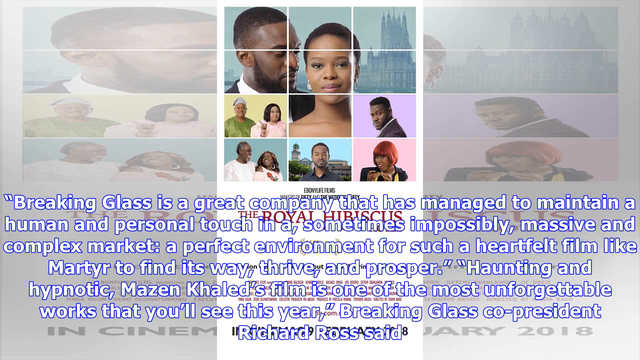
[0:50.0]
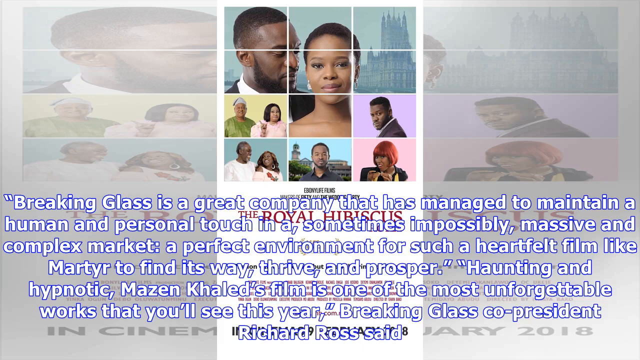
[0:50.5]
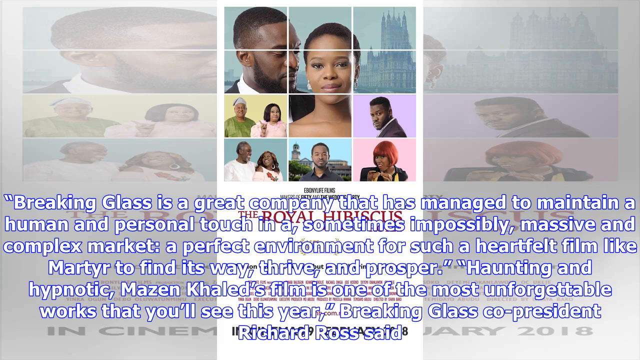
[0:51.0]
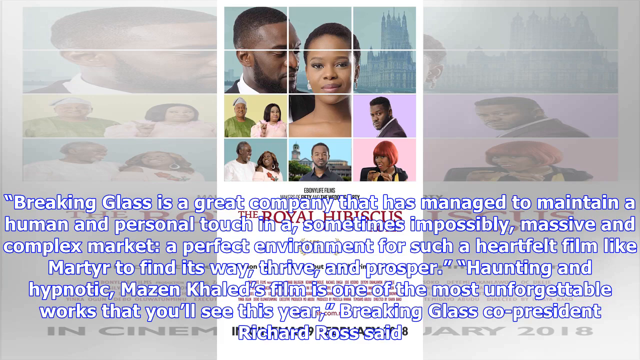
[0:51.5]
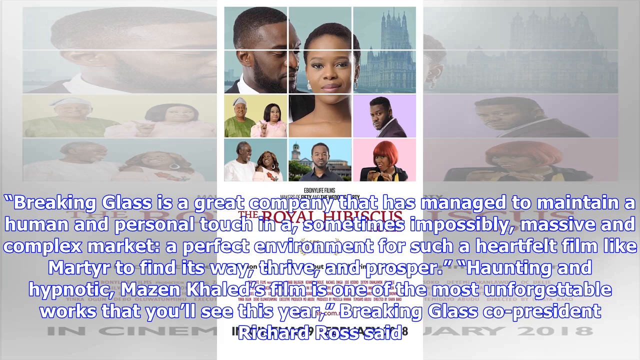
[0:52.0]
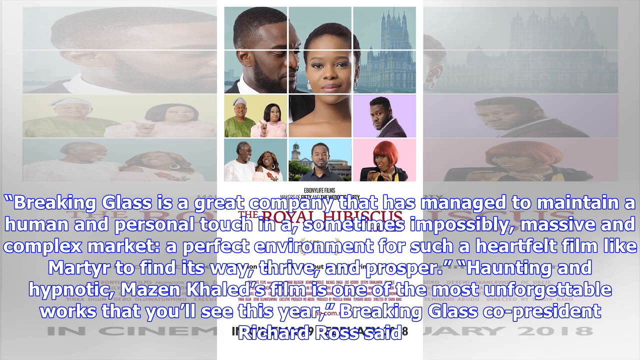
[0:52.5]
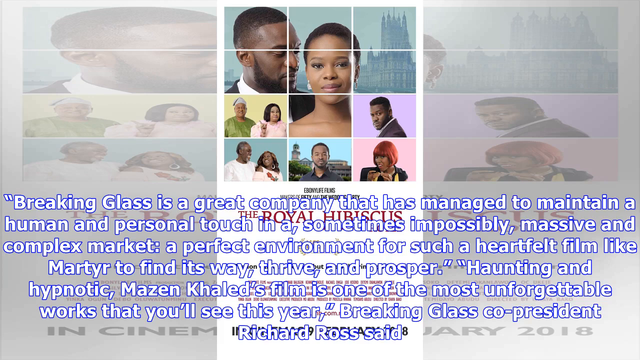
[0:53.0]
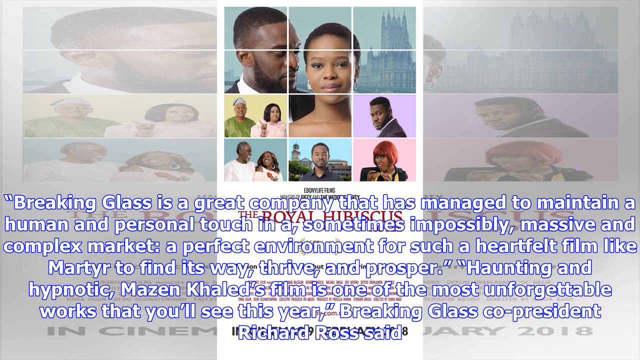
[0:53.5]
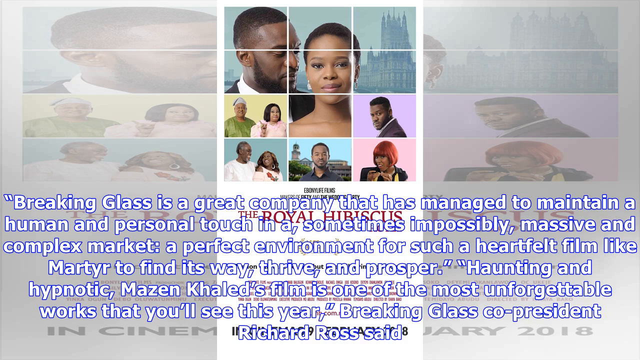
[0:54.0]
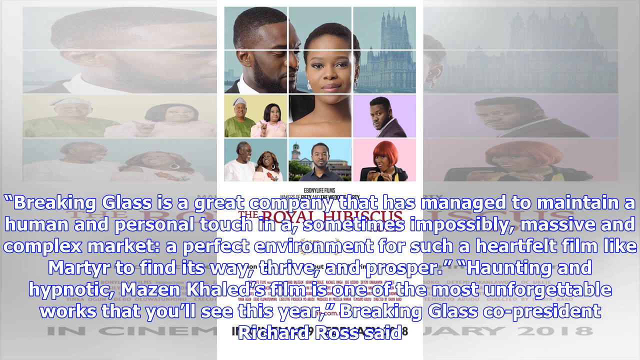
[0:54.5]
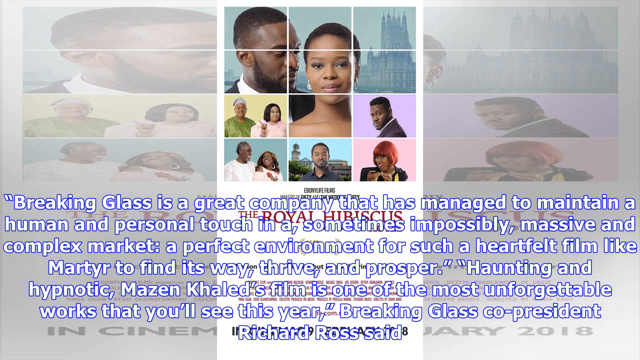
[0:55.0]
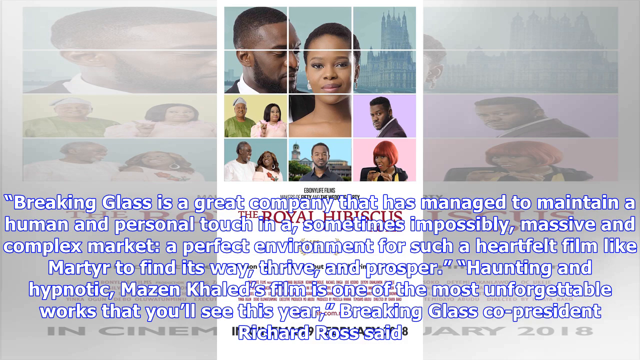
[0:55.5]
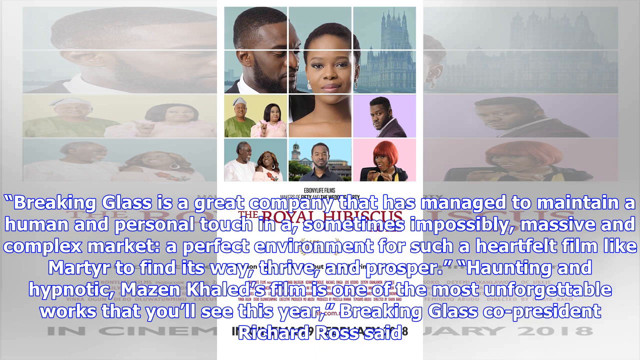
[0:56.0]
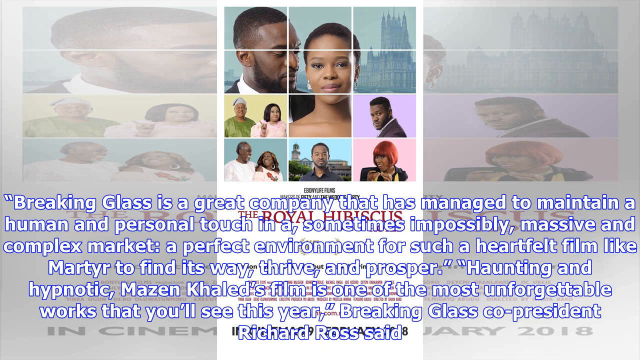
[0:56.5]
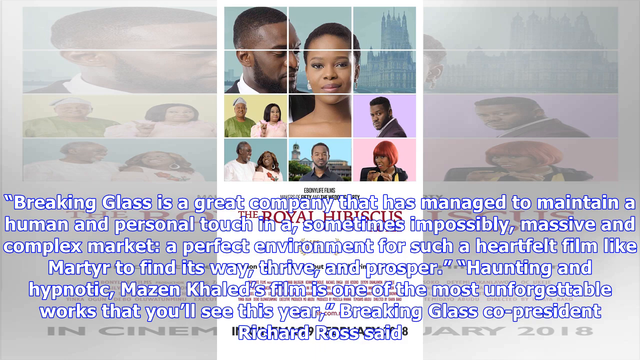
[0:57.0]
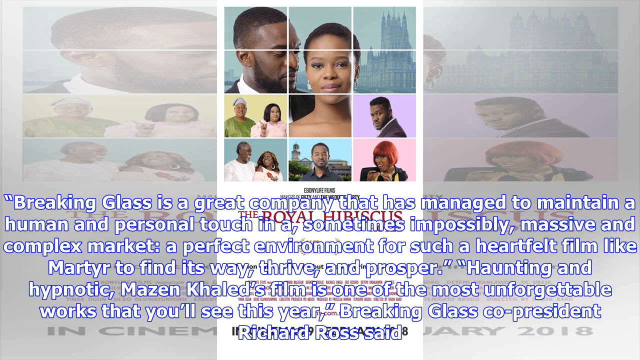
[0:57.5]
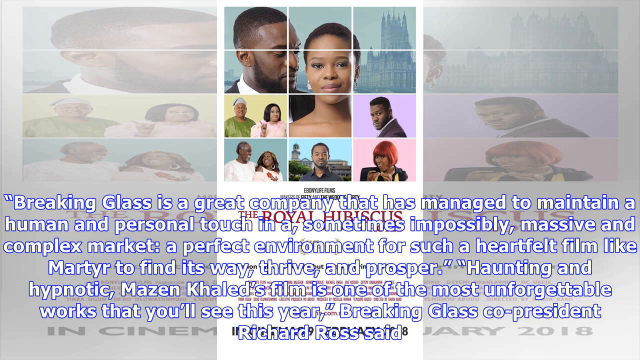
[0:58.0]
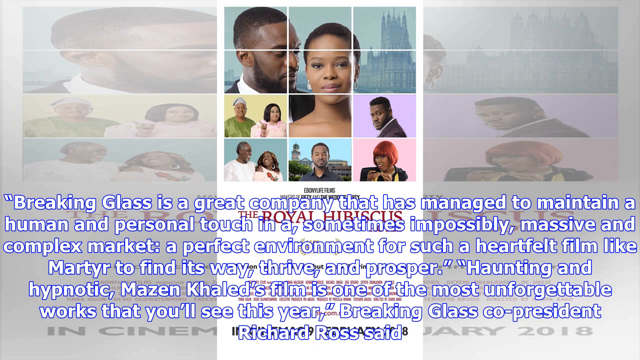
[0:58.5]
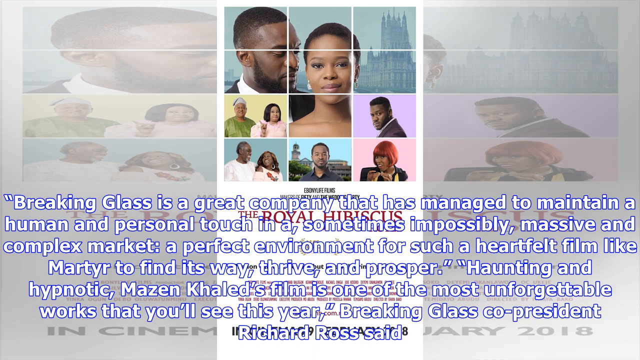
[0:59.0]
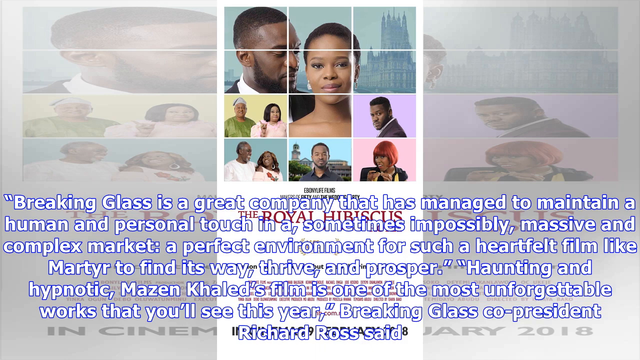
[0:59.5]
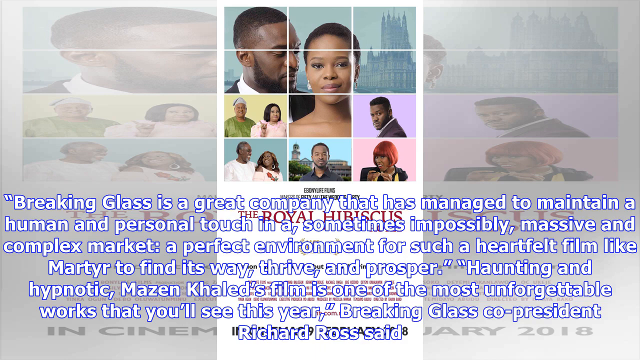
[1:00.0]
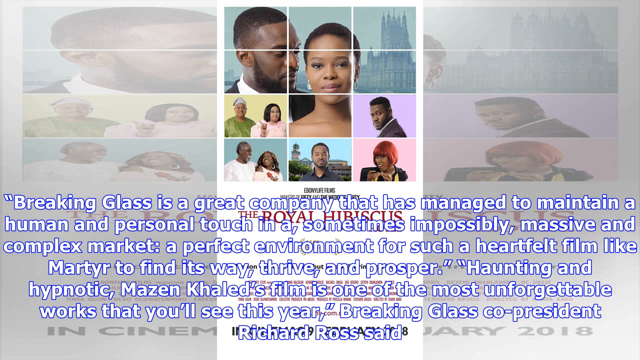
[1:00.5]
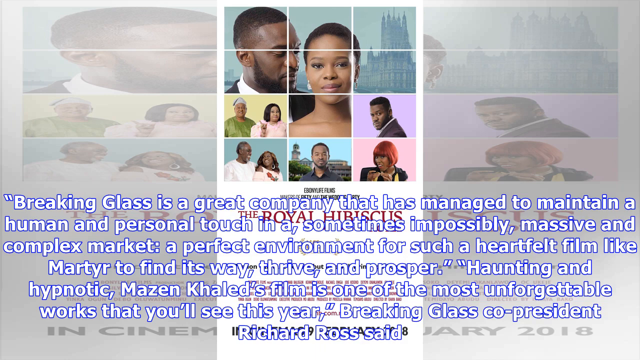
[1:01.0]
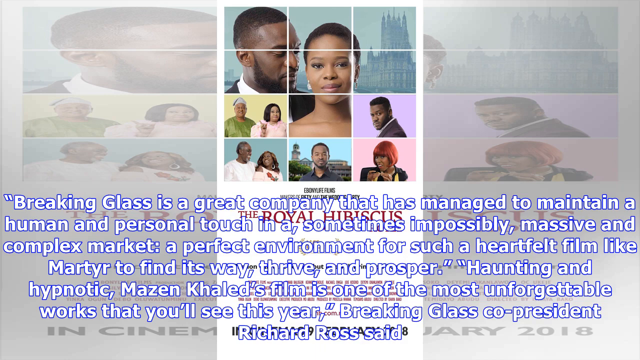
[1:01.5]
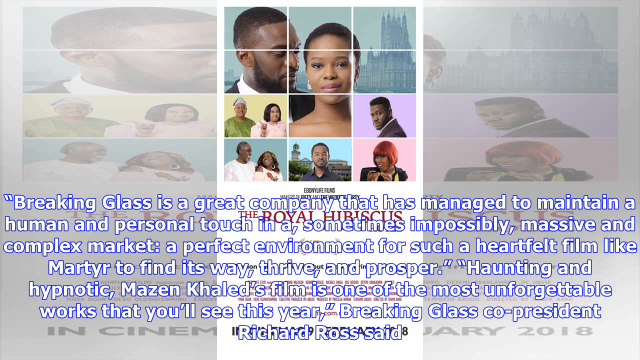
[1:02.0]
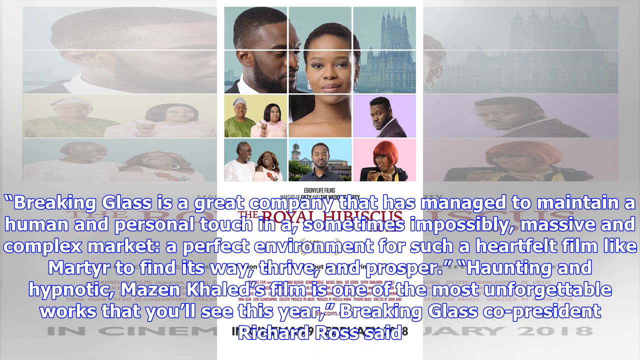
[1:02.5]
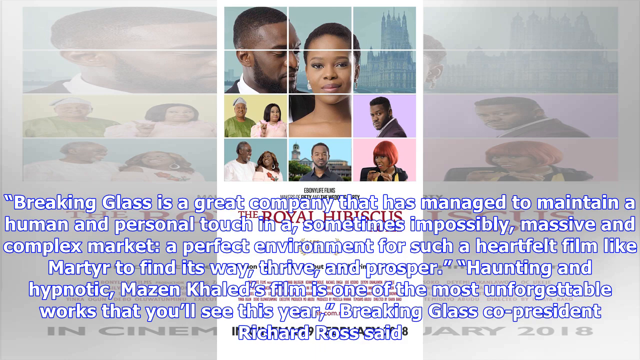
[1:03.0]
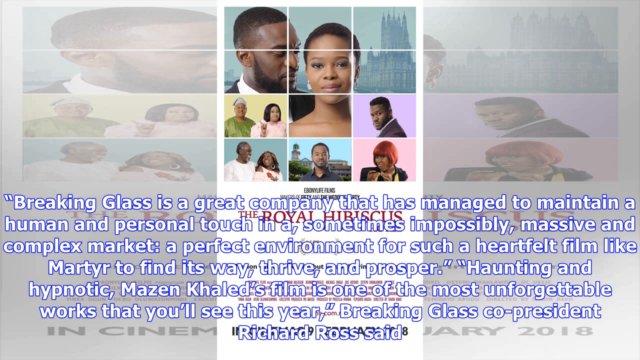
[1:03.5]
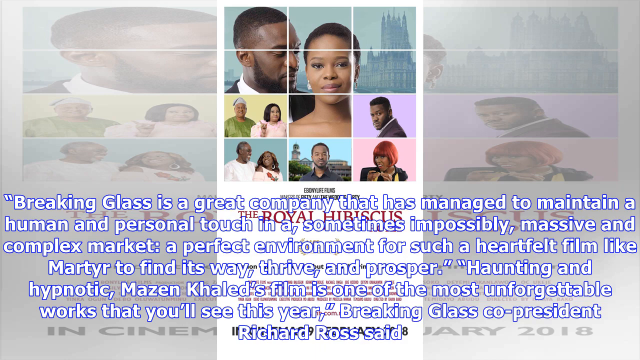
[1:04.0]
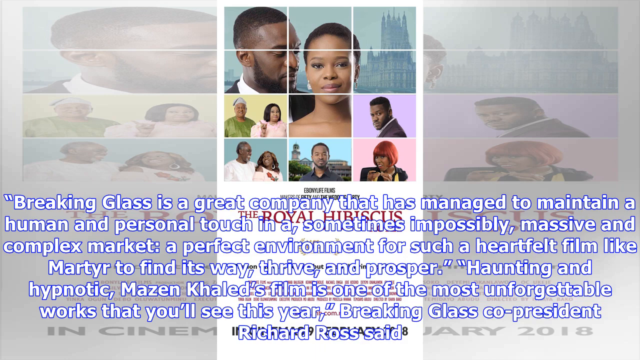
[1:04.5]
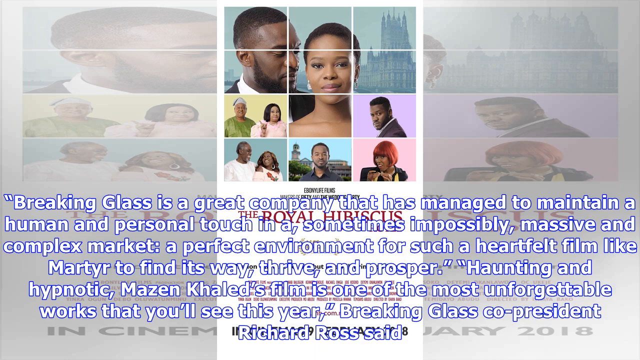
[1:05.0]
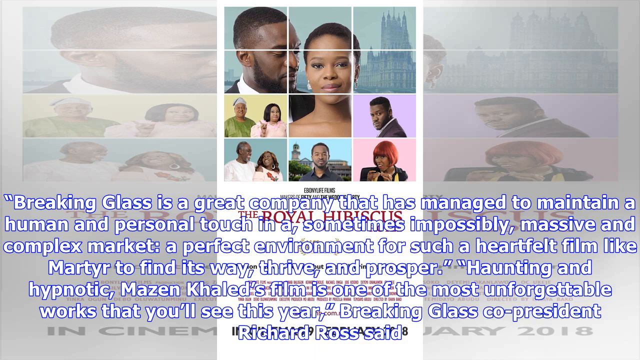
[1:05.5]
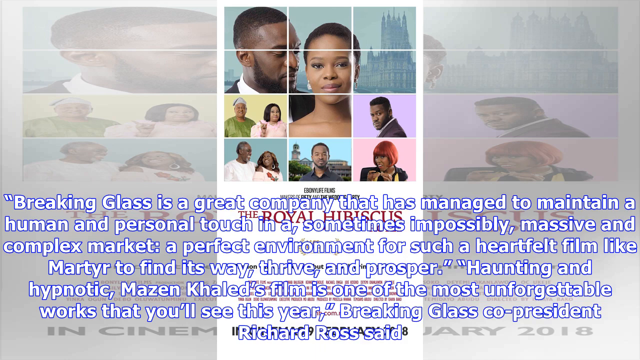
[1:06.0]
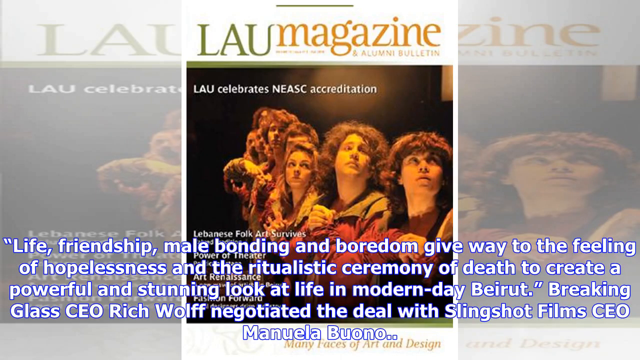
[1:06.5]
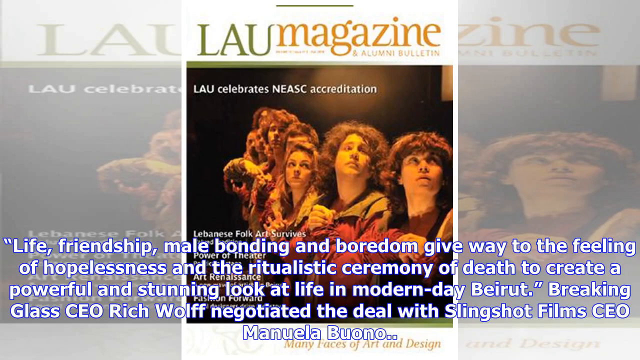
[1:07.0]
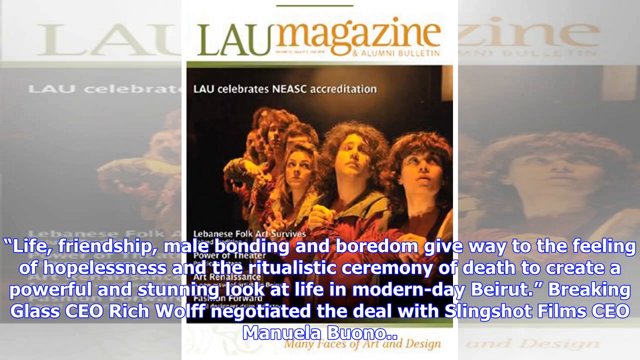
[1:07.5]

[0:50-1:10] A poster reads "the royal hibiscus," with many people on the front cover, many of whom look to be African-American. A caption at the bottom of the screen reads: "Breaking Glass is a great company that has managed to maintain a human and personal touch in a sometimes impossibly massive and complex market," followed by "haunting and hypnotic, Mazen Khaled's film is one of the most unforgettable works that you'll see this year," attributed to Breaking Glass co-president Richard Ross. The video then cuts to a screen with text reading: "life, friendship, male bonding and boredom give way to the feeling of hopelessness and the ritualistic ceremony of death to create a powerful and stunning look at life in modern-day Beirut. Breaking Glass CEO Rich Wolf negotiated the deal with Slingshot Film CEO."